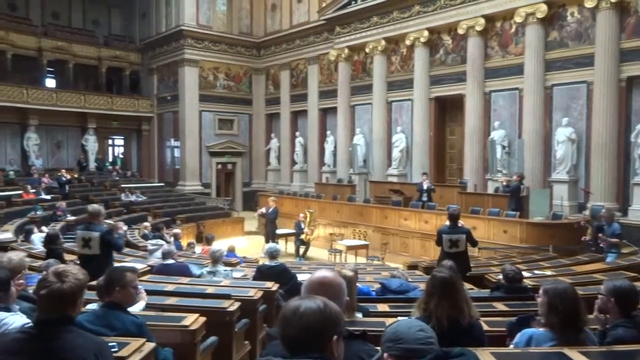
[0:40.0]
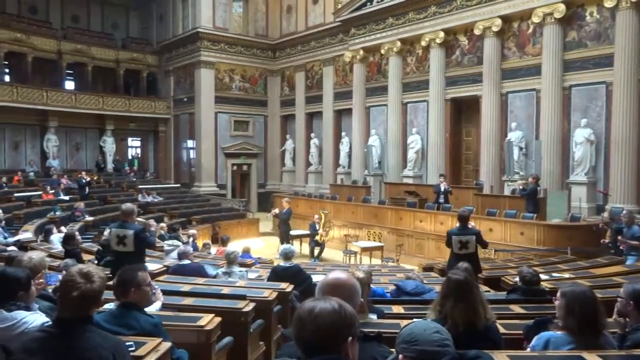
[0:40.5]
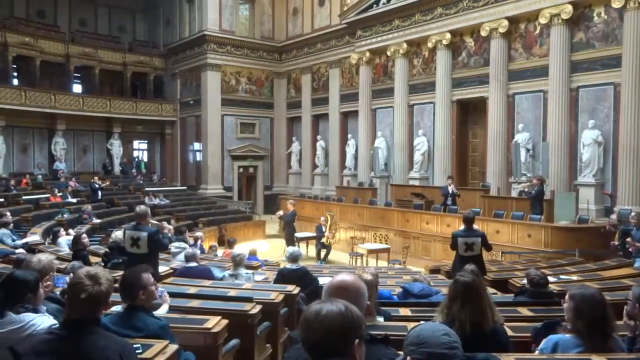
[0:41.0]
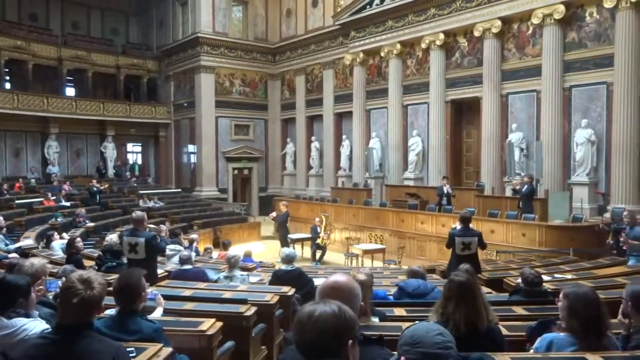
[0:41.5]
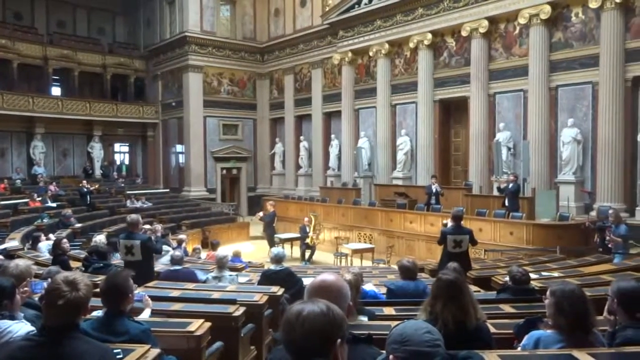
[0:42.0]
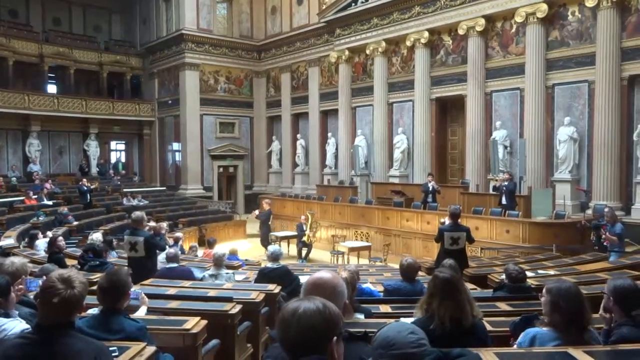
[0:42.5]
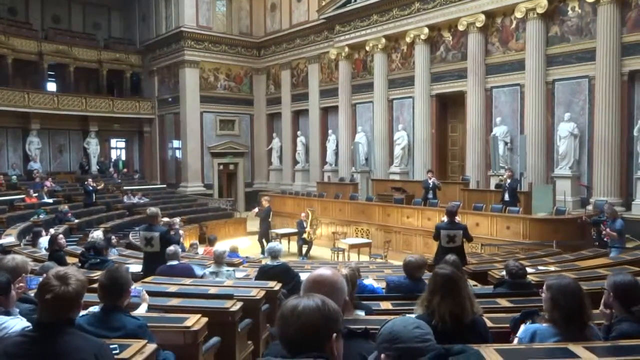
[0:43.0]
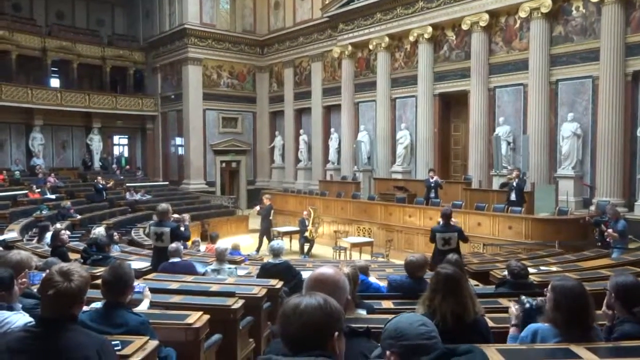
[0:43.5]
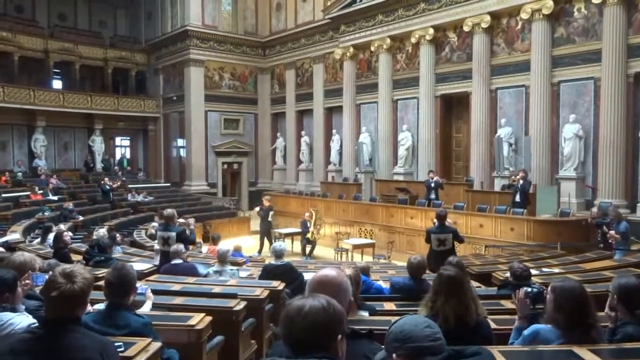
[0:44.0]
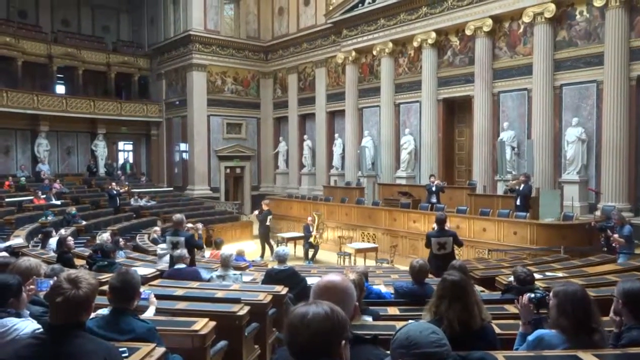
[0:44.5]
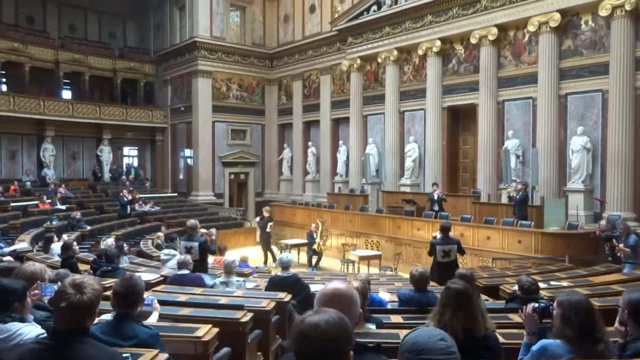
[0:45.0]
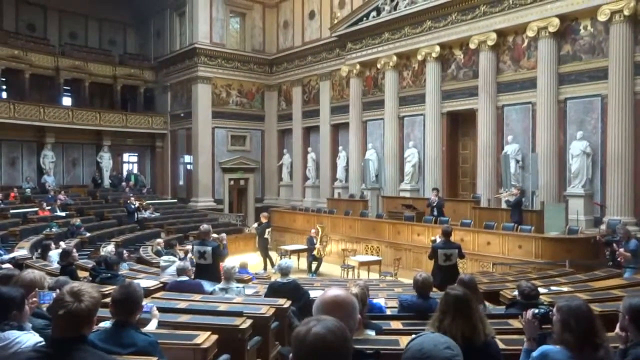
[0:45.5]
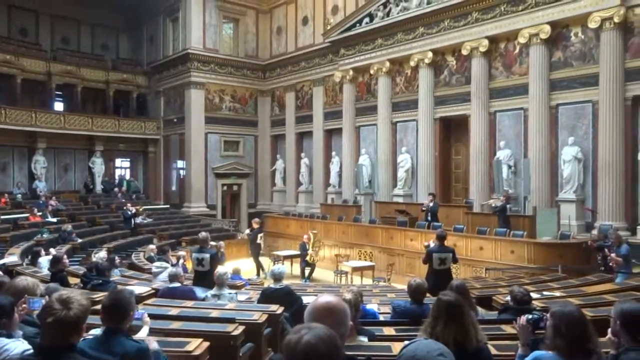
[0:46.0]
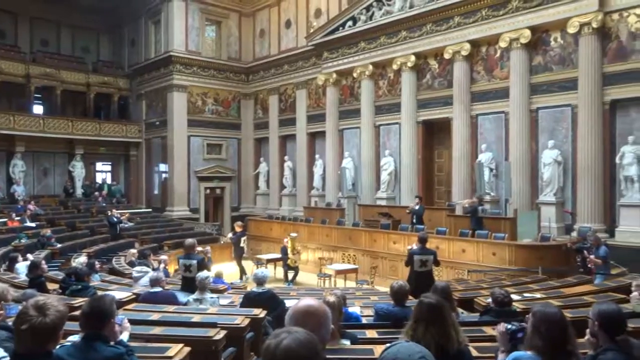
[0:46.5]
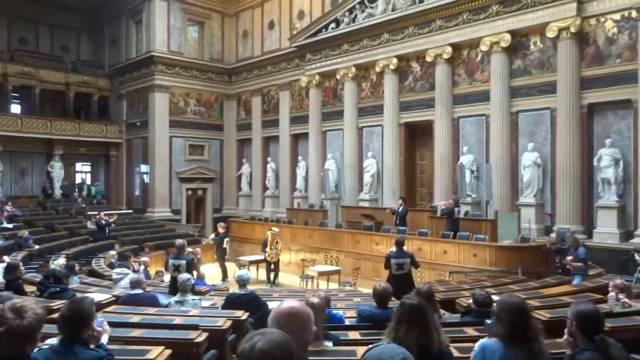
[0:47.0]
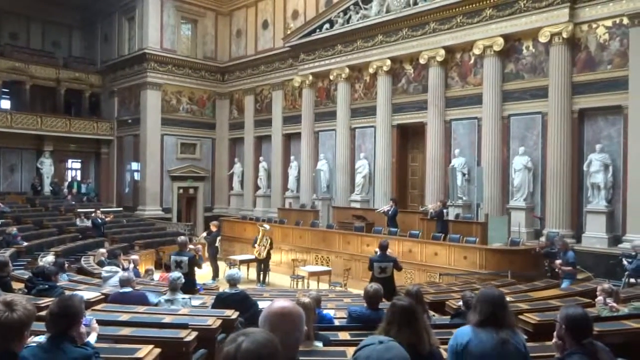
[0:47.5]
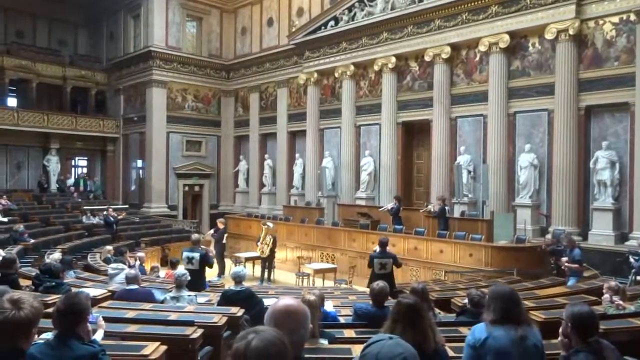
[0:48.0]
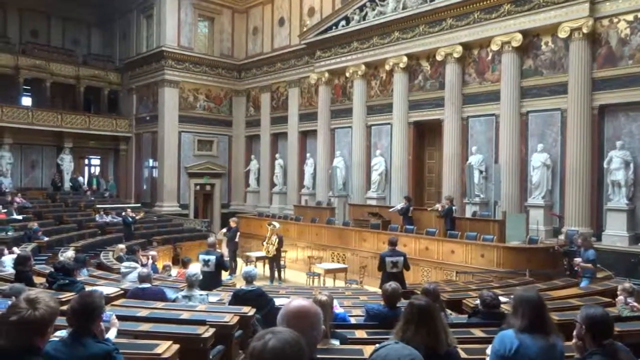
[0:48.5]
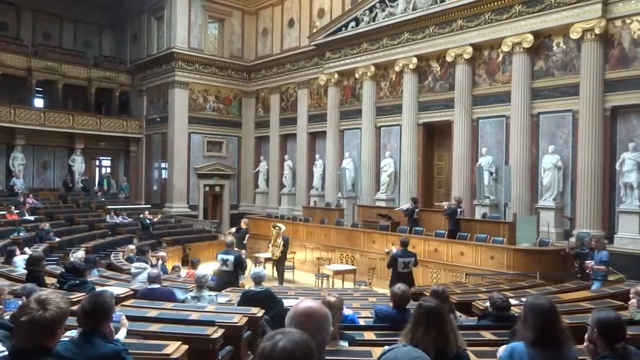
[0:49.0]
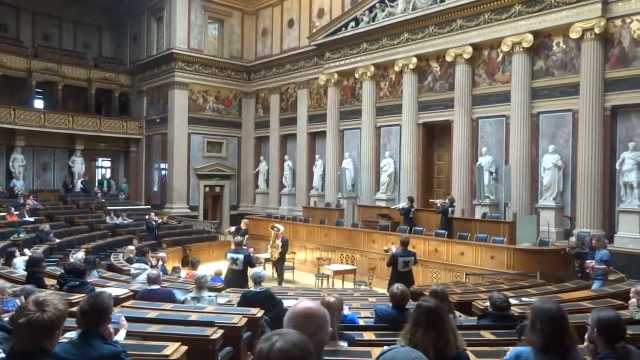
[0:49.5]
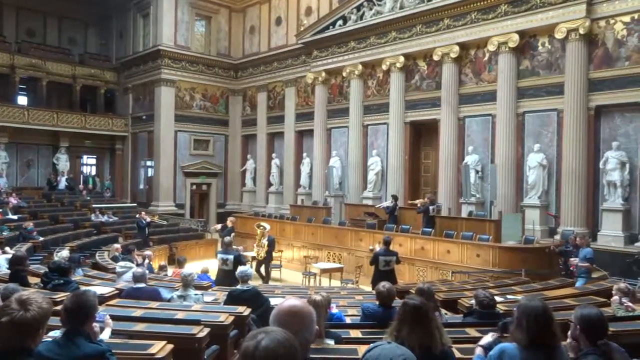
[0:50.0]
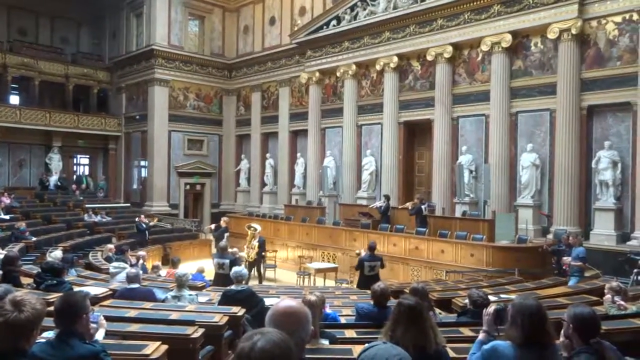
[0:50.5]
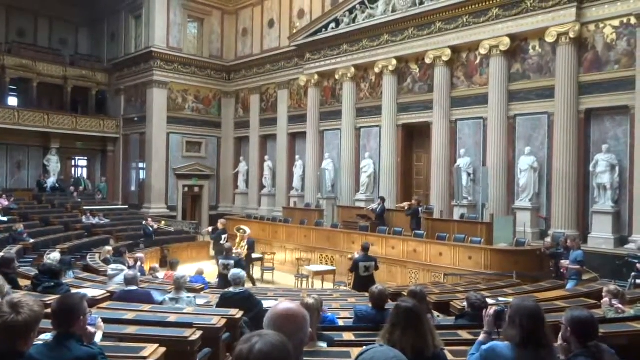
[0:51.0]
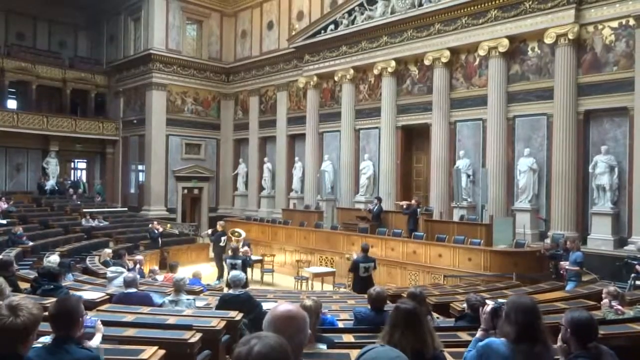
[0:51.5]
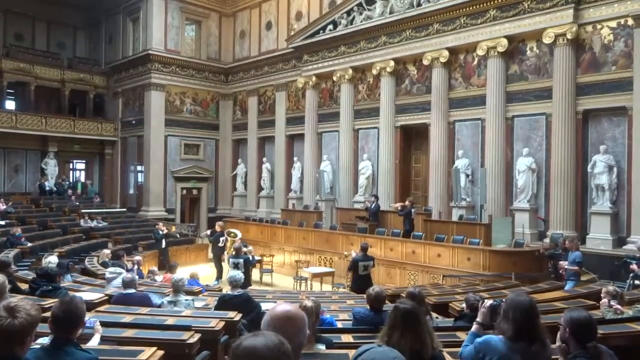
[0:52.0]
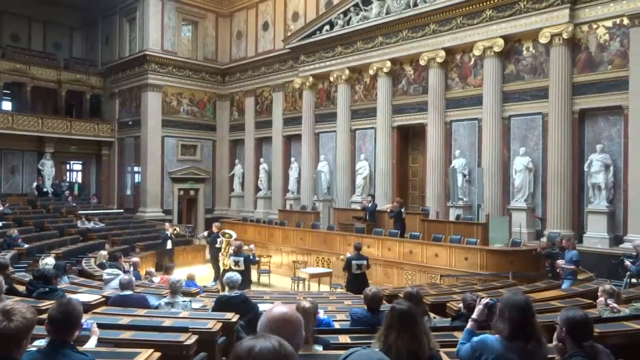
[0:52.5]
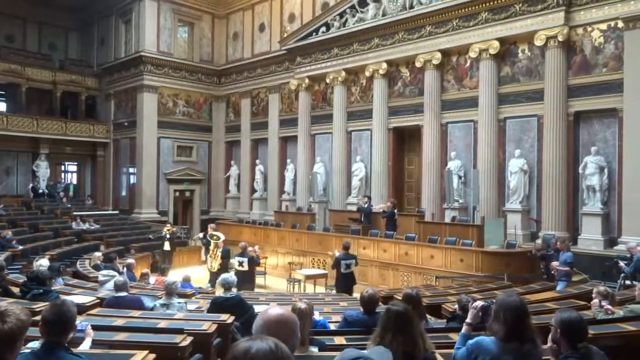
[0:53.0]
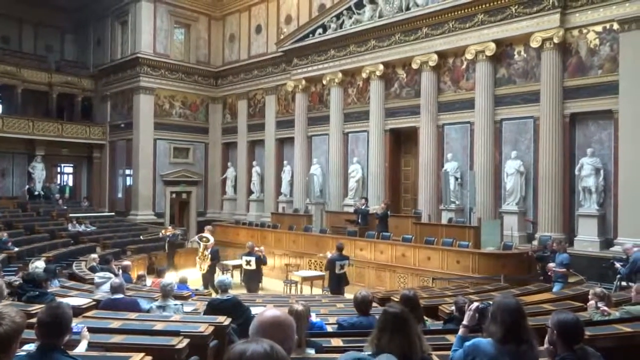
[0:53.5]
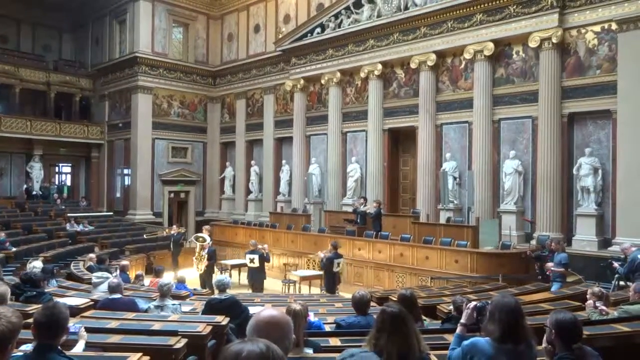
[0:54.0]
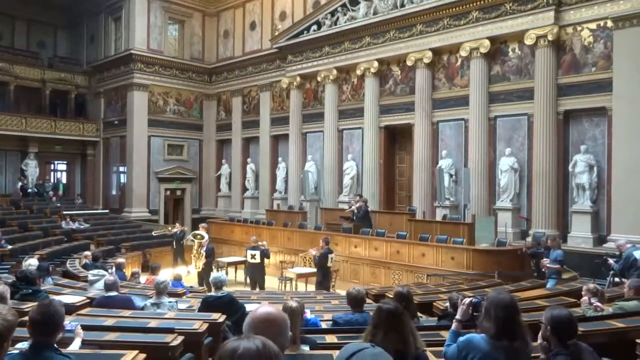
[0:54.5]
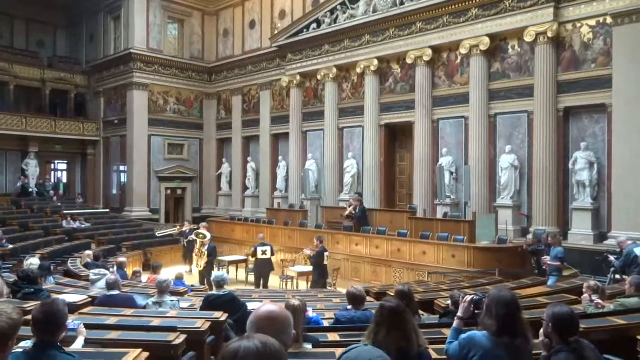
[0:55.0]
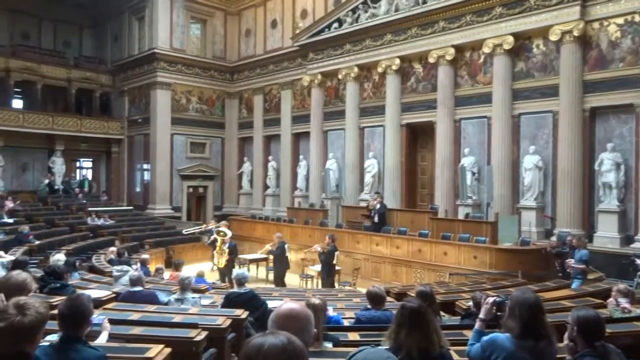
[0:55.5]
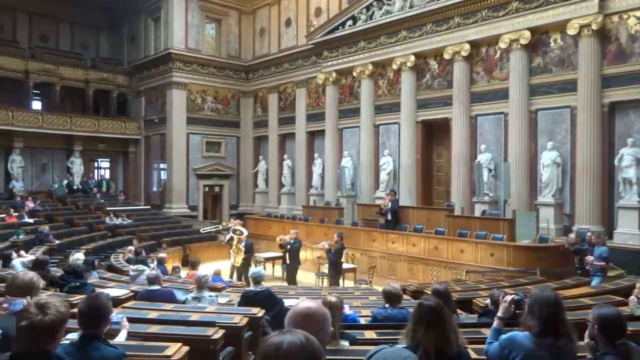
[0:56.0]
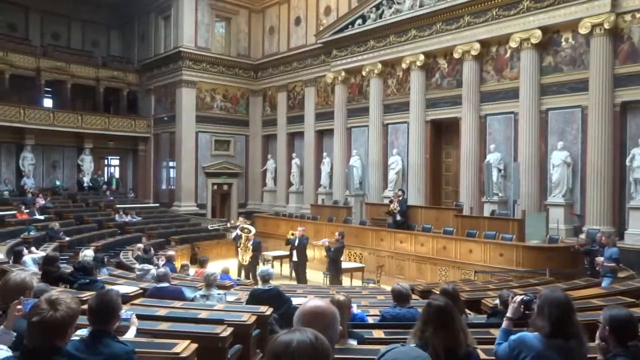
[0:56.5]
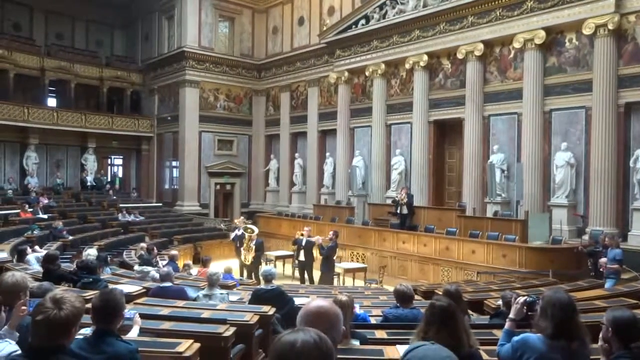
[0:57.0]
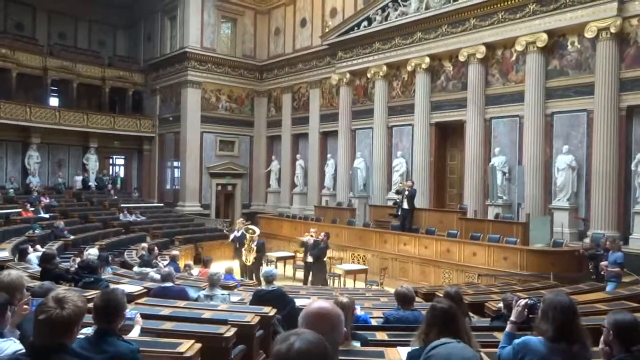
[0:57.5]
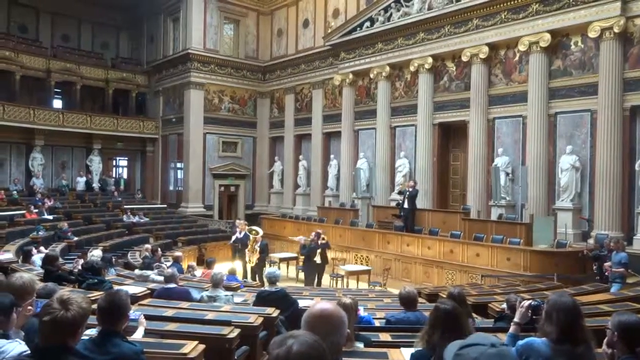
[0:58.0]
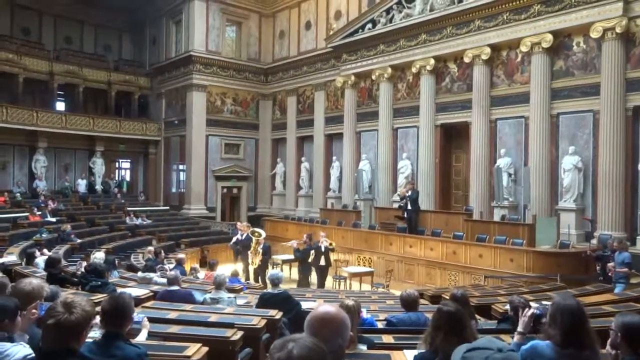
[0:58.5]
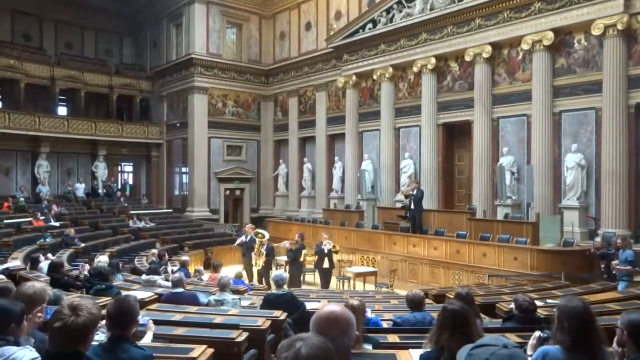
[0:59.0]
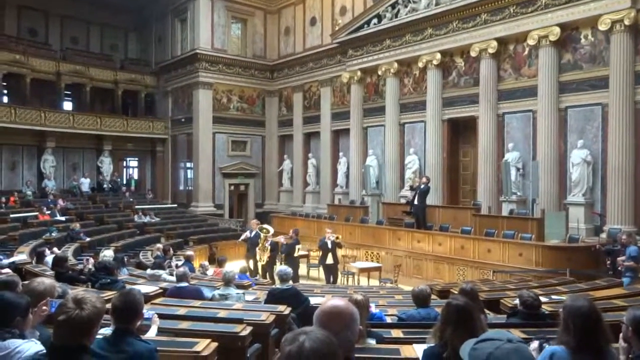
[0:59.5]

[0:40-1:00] The person on the right side behind the chairs has moved a little to the left. Down to the right of him is a man with a camera. The man in the jacket with the X on it is just right of center toward the bottom, and another one comes in from the left corner; both are playing trumpets or trombones. On the floor area two men are playing; the man on the left walks toward the man sitting down playing and turns around to face left. As he plays, the men in the jackets slowly walk a little closer. In the far distance on the left side, a couple more people come down playing. The person in the top left moves more to the center behind the chairs. All the men with X's on their coats make their way down to the floor; there are four of them. The man with the big trombone and a couple of other people play musical instruments as the two behind the chairs meet in the center portion, playing their instruments. A couple more people mill about on the left and right sides. They all turn to face left toward the crowd. One man stands on a chair blowing the horn, arching his back every time he blows.